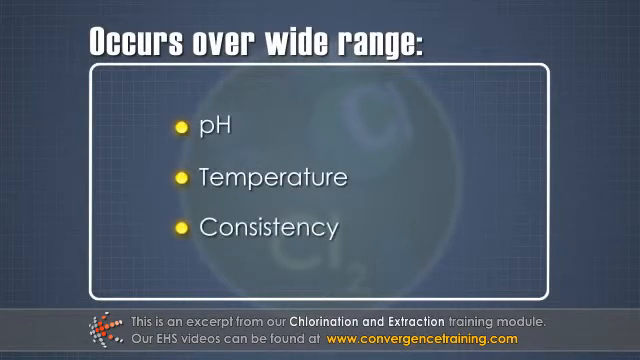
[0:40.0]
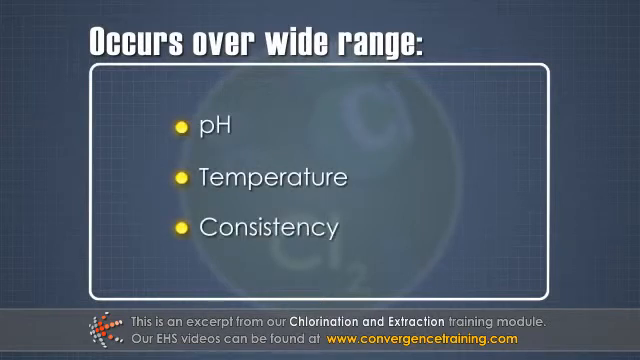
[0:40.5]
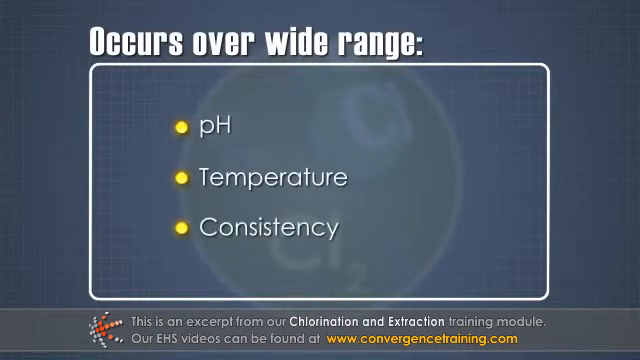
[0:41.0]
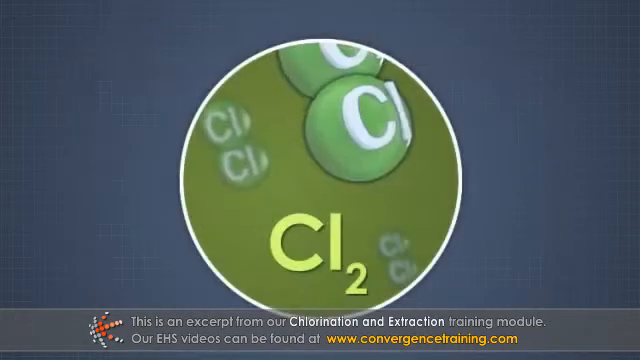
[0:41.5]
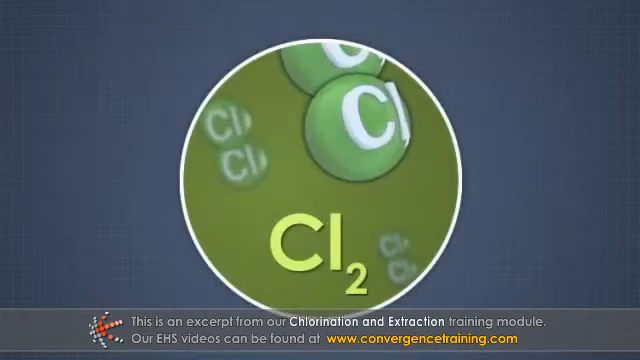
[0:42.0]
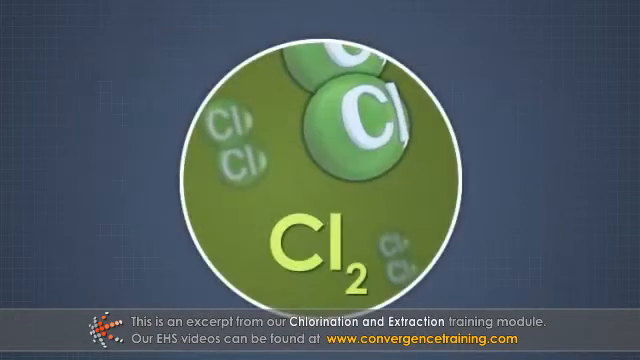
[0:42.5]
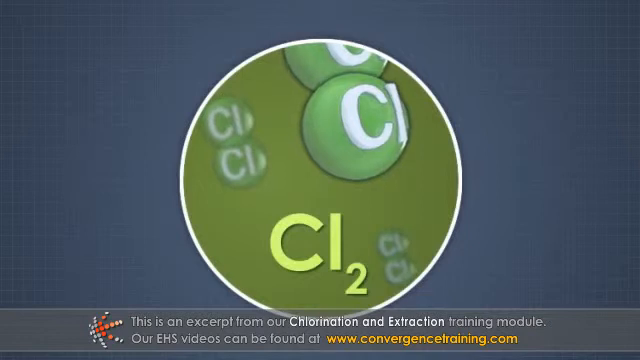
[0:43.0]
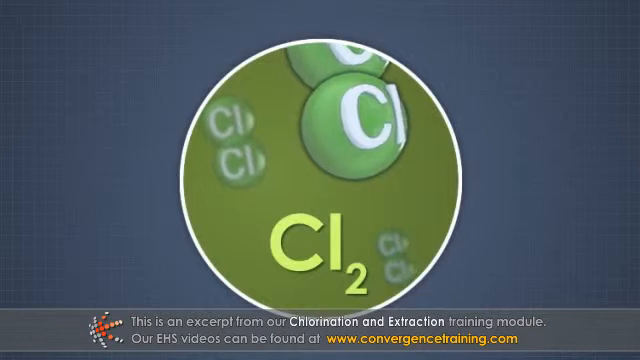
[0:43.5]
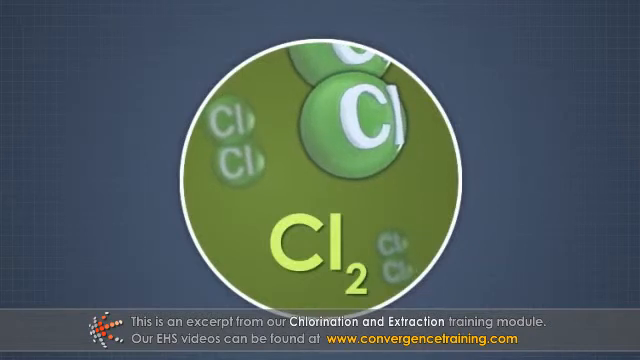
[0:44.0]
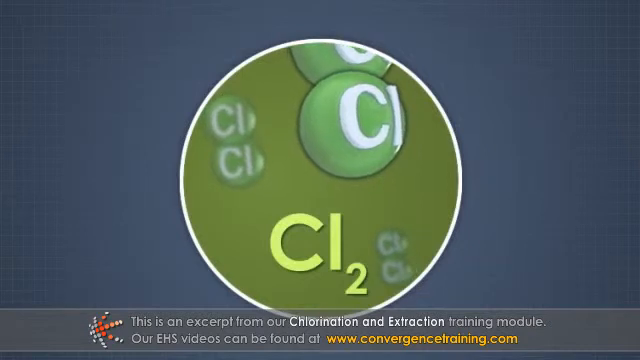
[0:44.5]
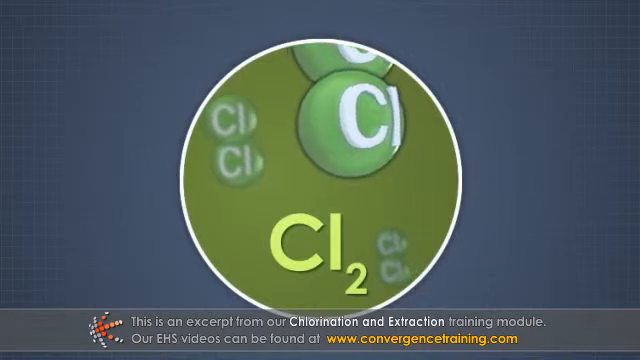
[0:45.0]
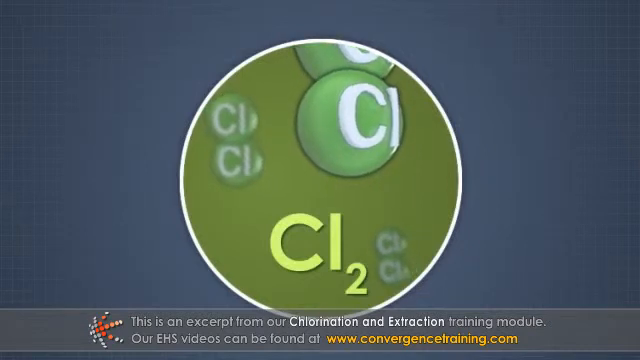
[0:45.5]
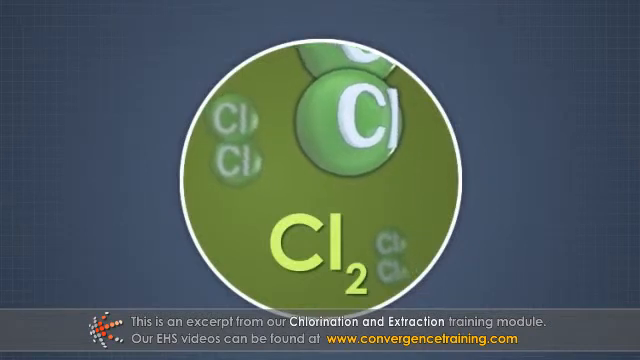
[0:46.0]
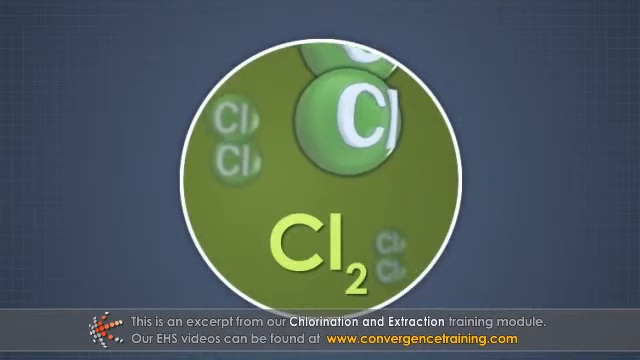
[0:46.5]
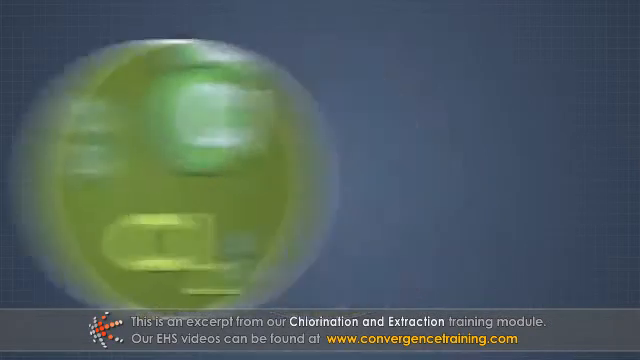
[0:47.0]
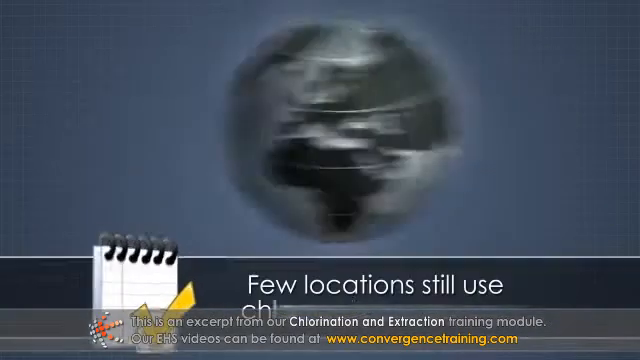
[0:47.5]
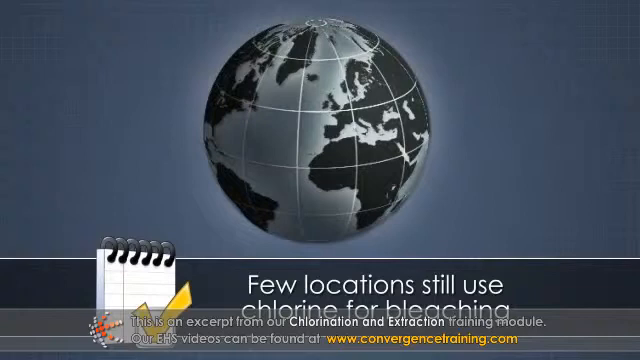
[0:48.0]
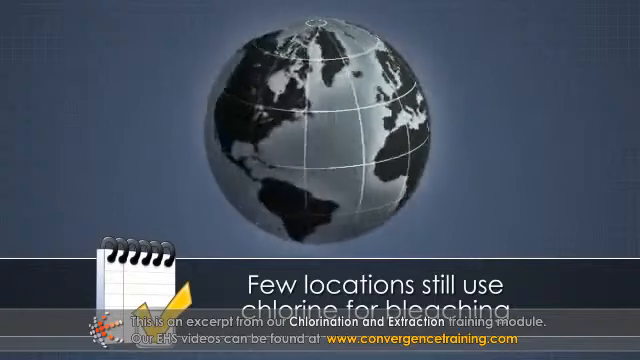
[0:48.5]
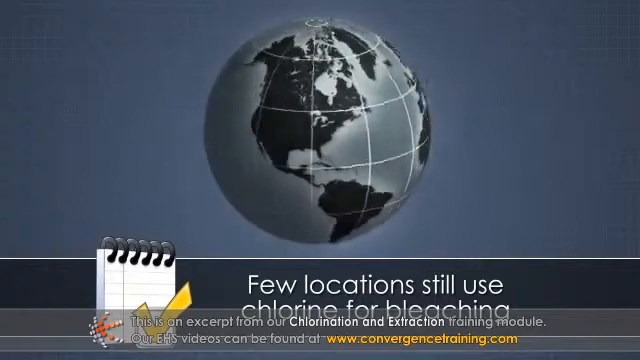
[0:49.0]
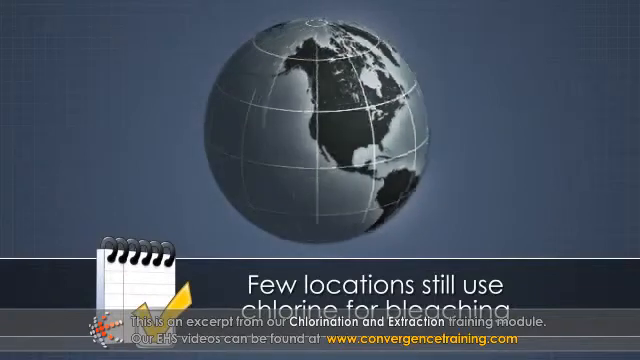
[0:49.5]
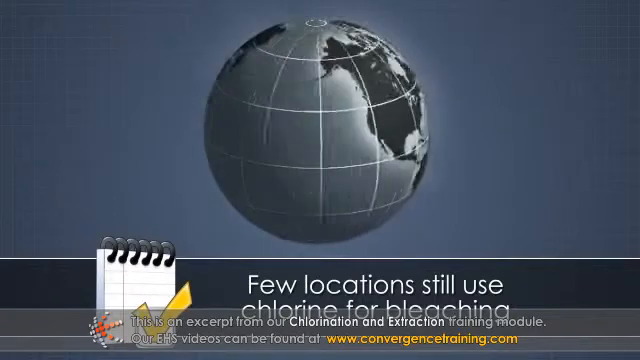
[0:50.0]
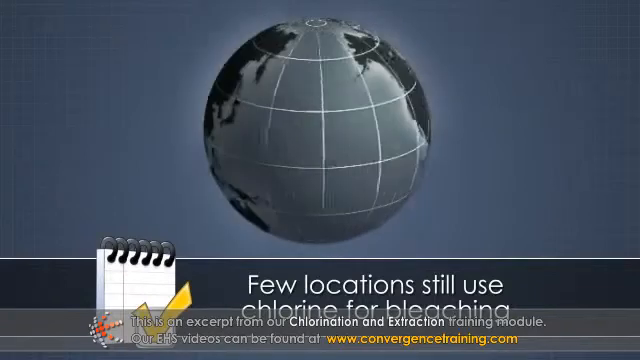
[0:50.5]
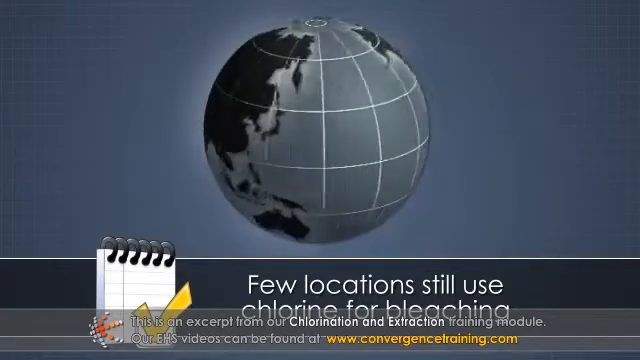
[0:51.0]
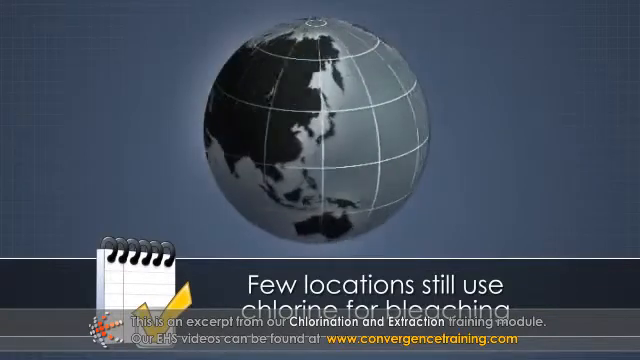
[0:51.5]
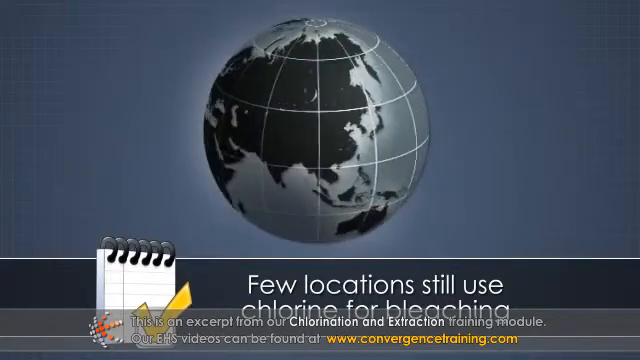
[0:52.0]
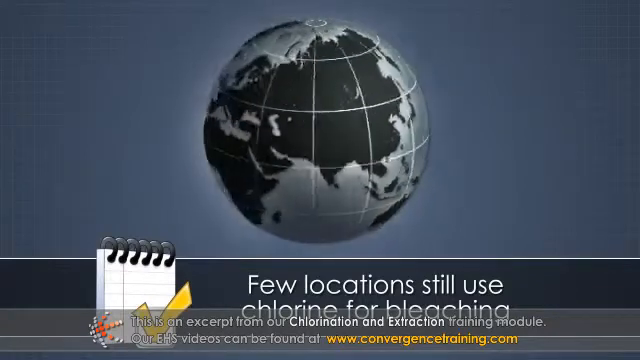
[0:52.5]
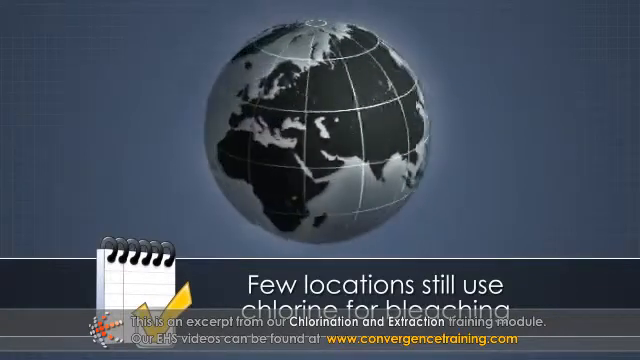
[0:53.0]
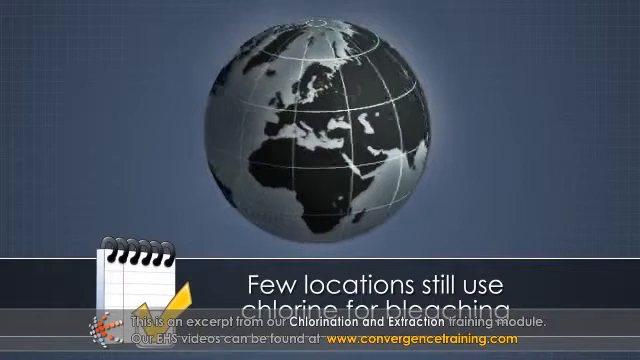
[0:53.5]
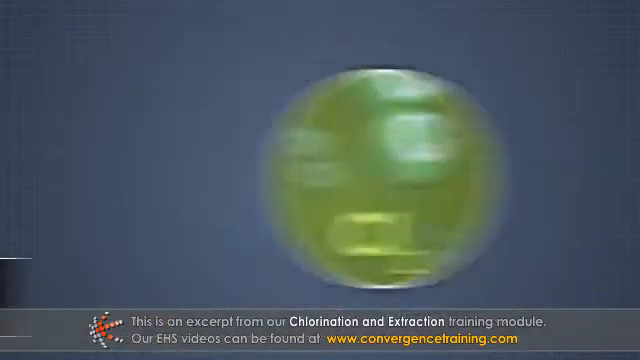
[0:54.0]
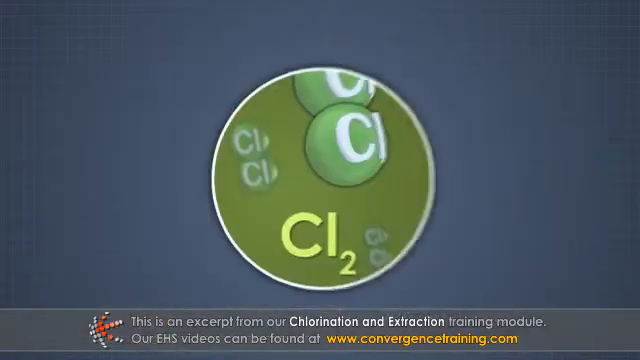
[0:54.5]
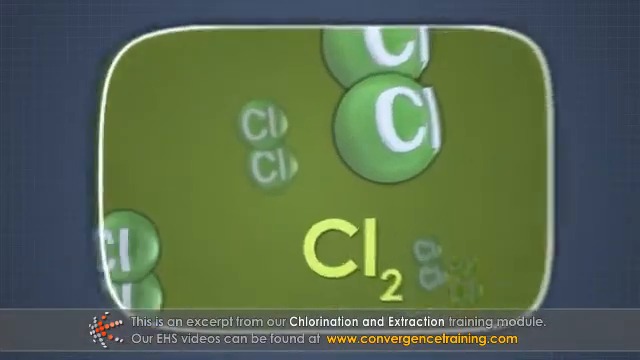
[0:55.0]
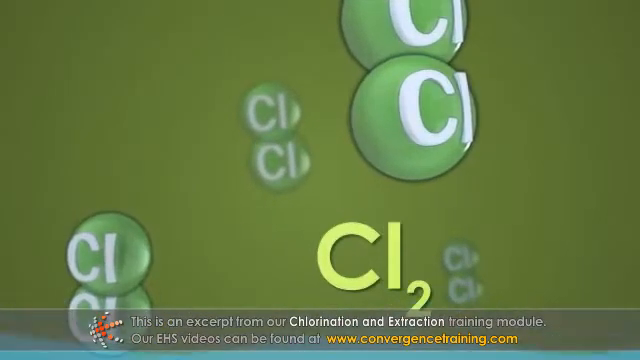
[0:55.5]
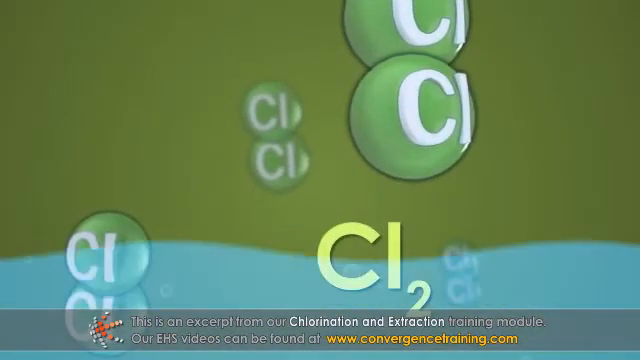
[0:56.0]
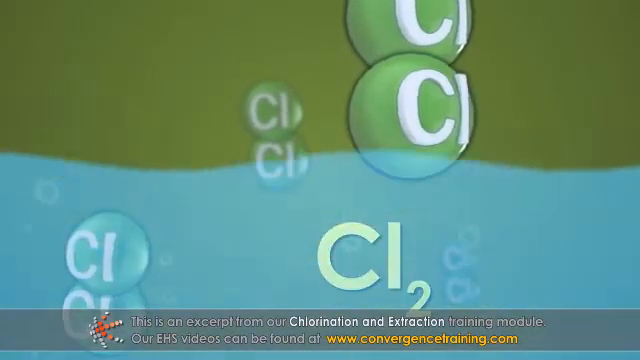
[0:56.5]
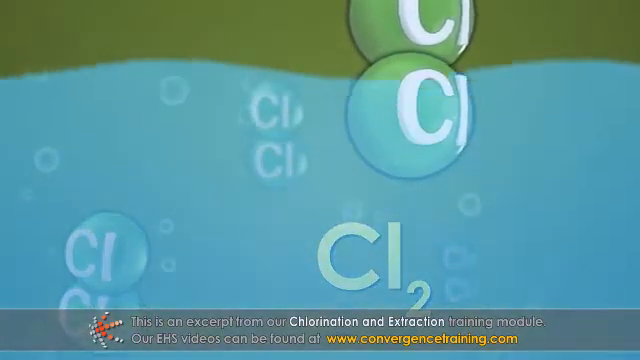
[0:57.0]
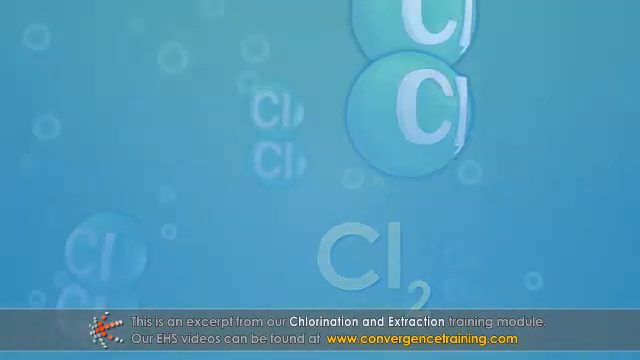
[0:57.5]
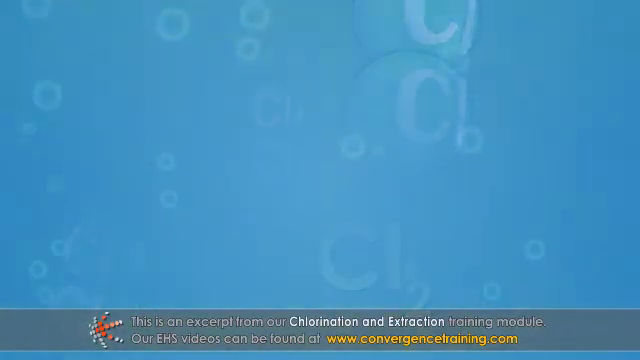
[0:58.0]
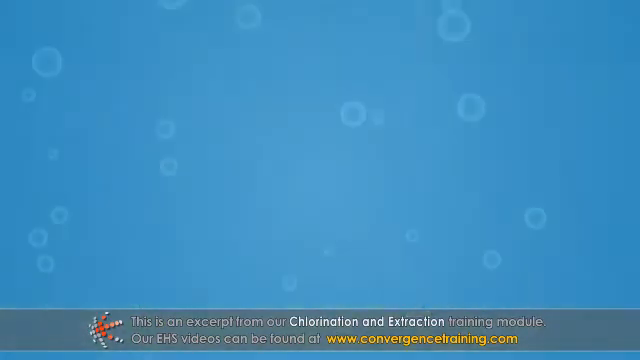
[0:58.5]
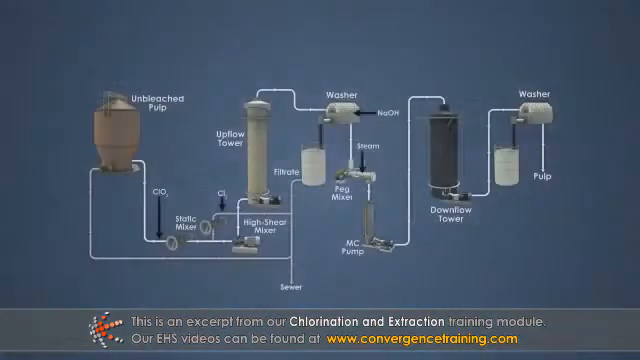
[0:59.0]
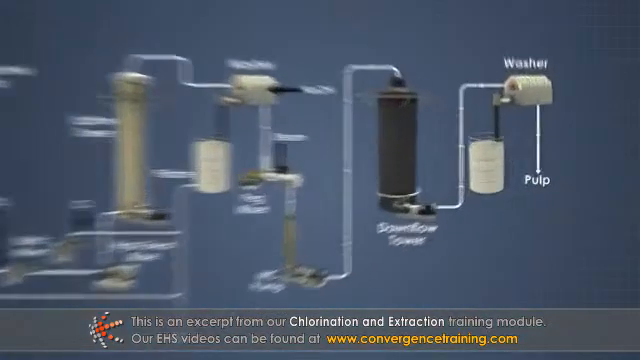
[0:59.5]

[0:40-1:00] The text "occurs over wide range" with pH, temperature and consistency is presented within a white frame. The video then goes to the chlorine molecule in the circle, then to an animated image of the globe rotating, with the text "few locations still use chlorine for bleaching". Next comes the green chlorine circle, which expands to encompass the entire screen, and a water effect appears over it. The video returns to the initial schematic, focusing on the last few visual elements of the process. Below, the caption reads "This is an excerpt from our chlorination and extraction training module Our EHS videos can be found at www.convergencetraining.com", with the hyperlink in yellow. On the right side is a small logo made of squares, kind of a burst or star, with white, red and orange squares. The text is white, contrasting with the textured background of white squares.